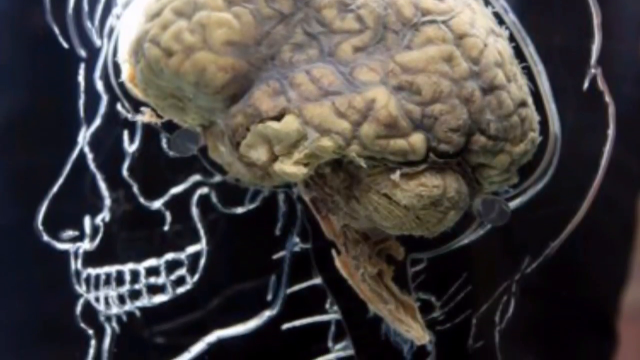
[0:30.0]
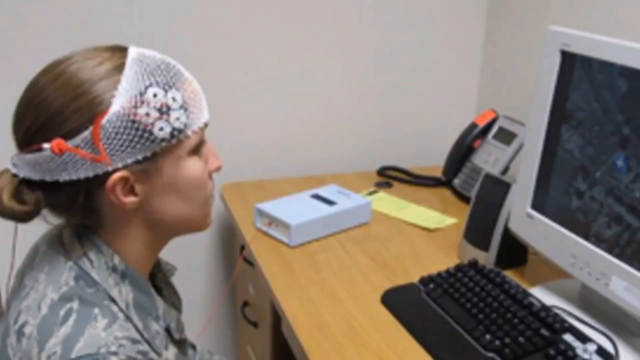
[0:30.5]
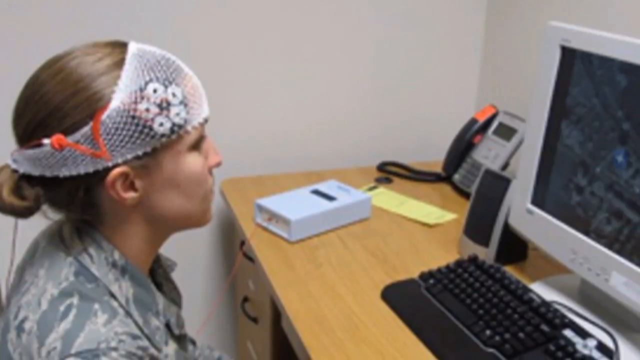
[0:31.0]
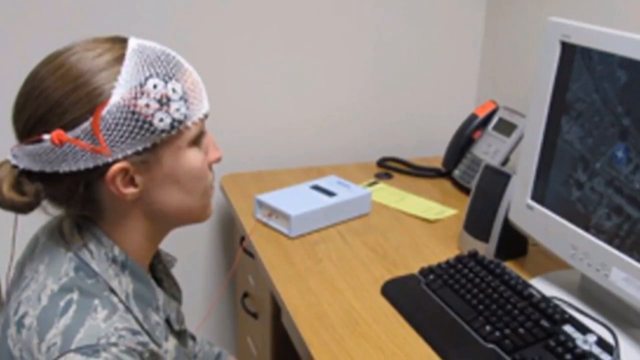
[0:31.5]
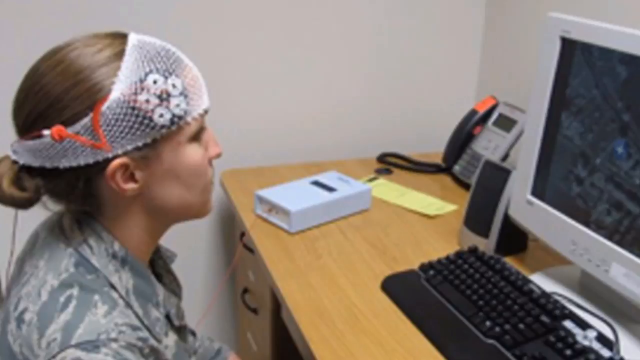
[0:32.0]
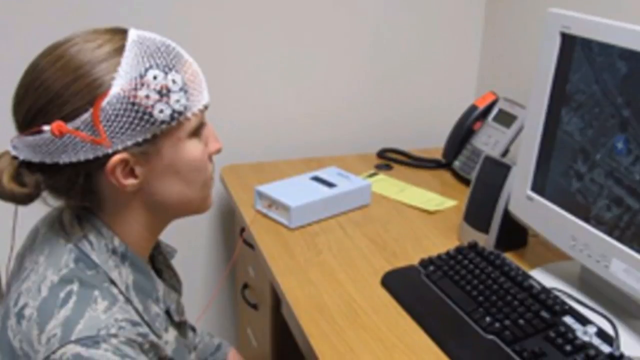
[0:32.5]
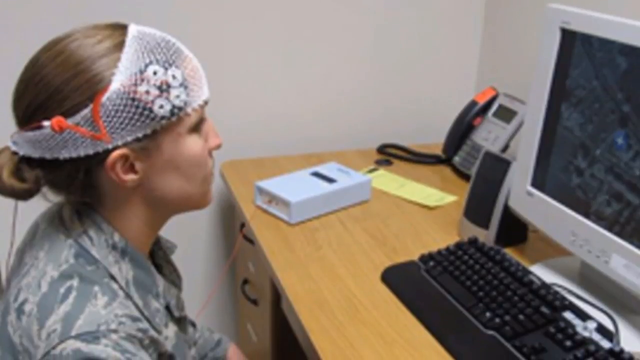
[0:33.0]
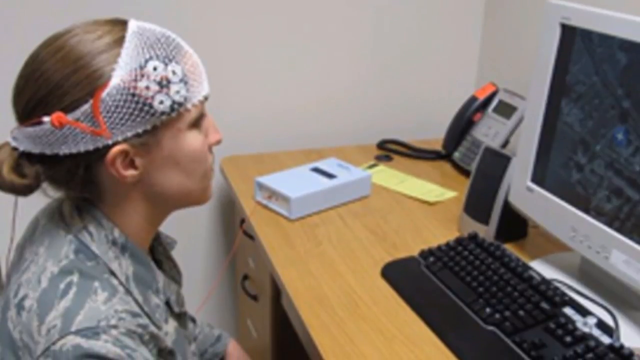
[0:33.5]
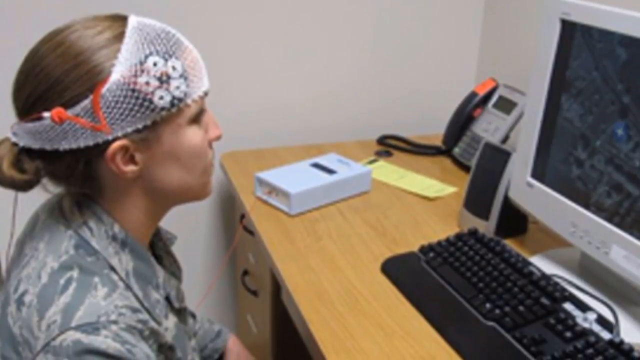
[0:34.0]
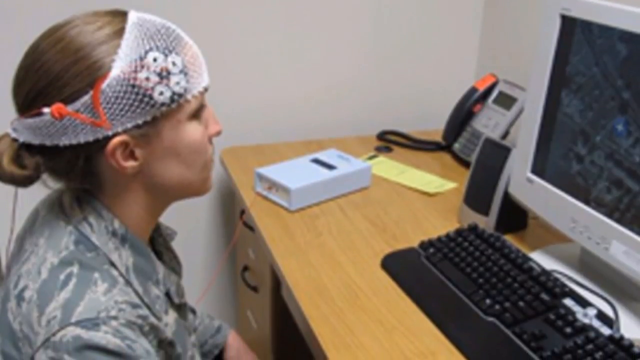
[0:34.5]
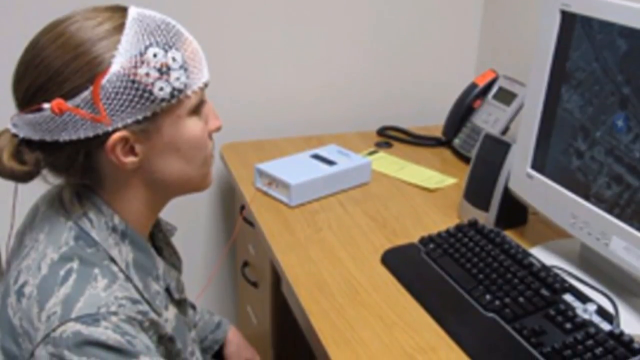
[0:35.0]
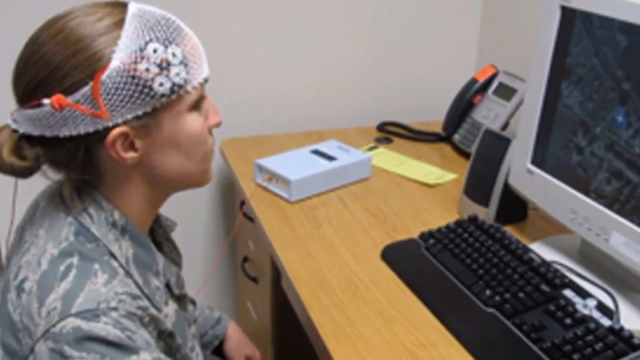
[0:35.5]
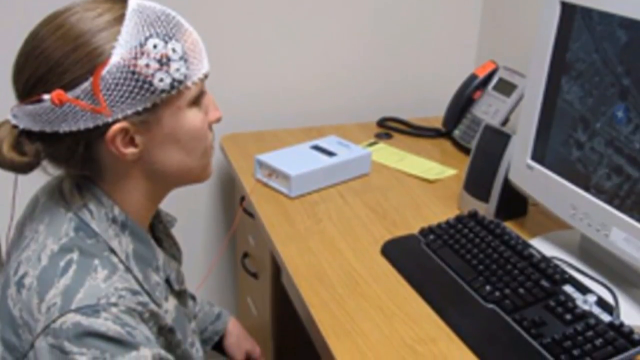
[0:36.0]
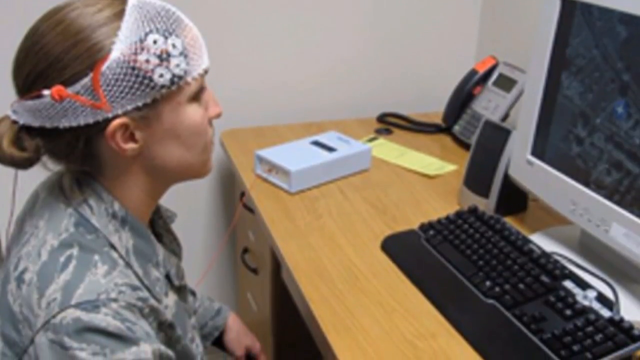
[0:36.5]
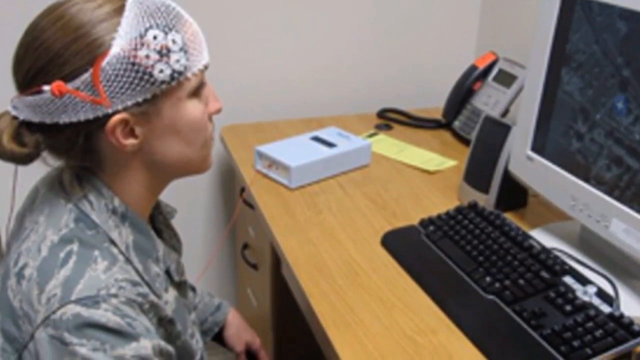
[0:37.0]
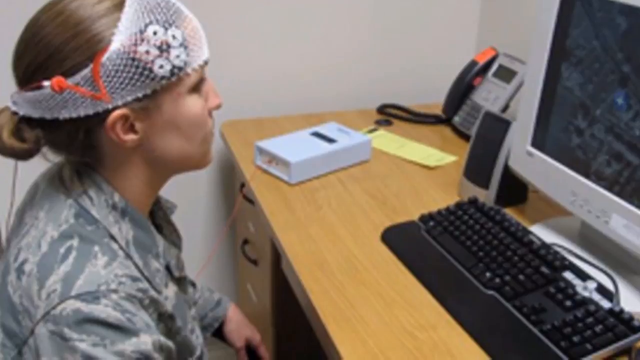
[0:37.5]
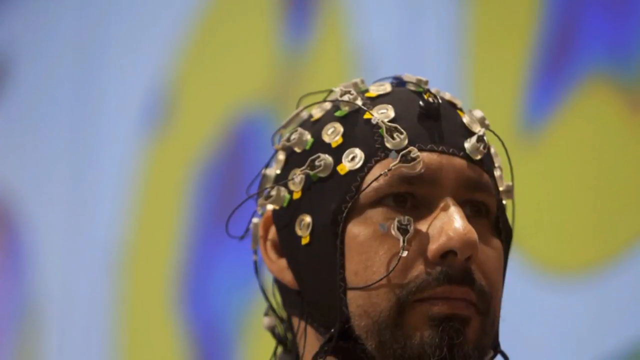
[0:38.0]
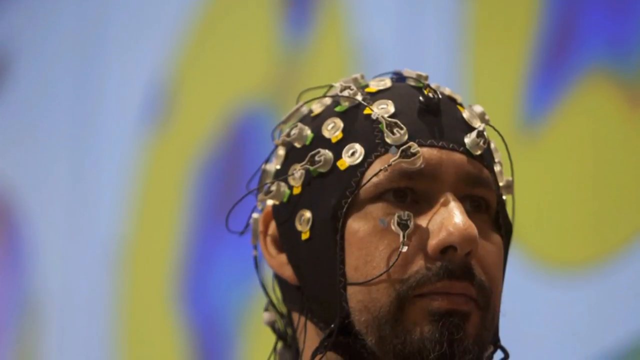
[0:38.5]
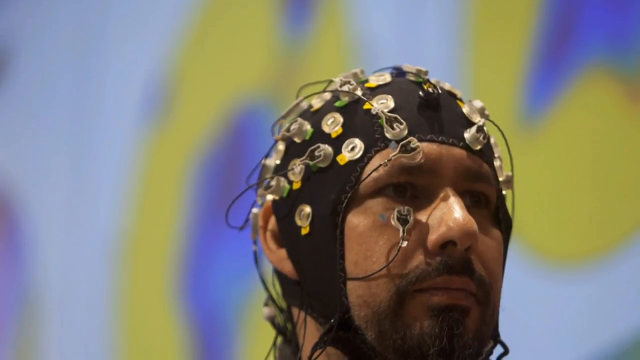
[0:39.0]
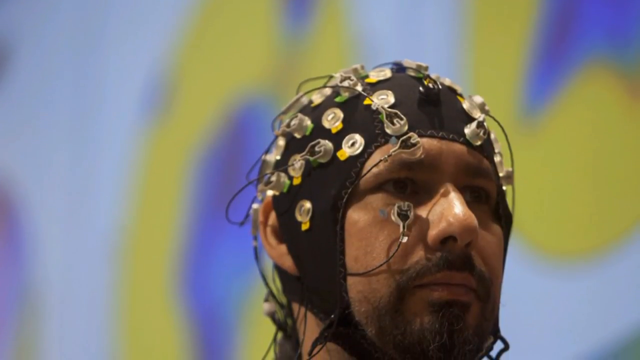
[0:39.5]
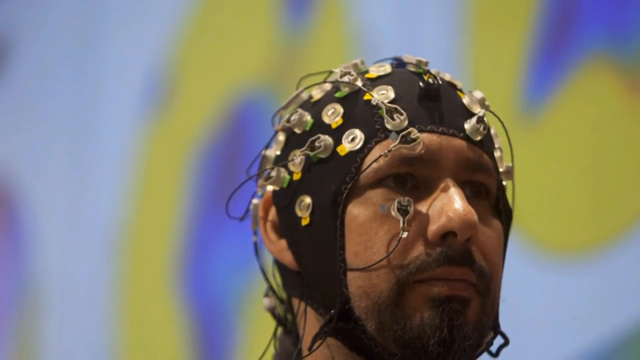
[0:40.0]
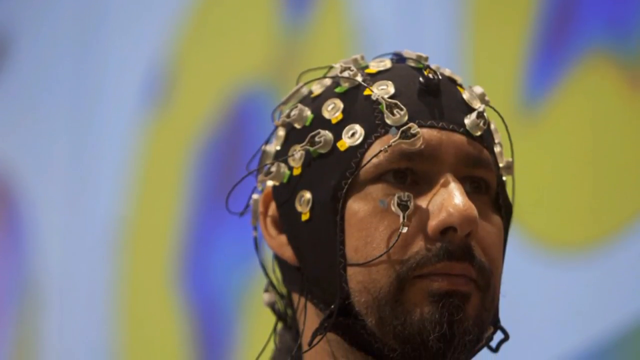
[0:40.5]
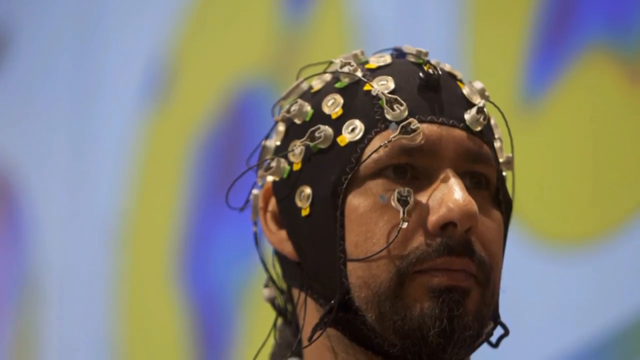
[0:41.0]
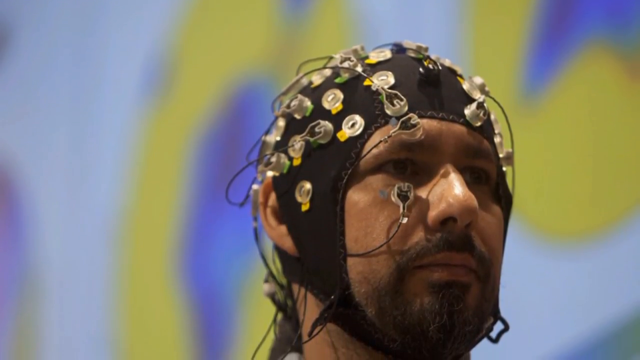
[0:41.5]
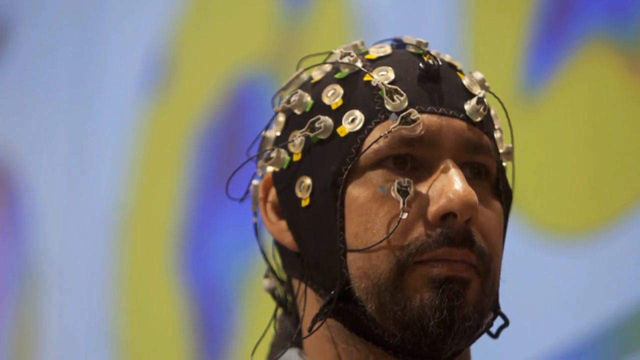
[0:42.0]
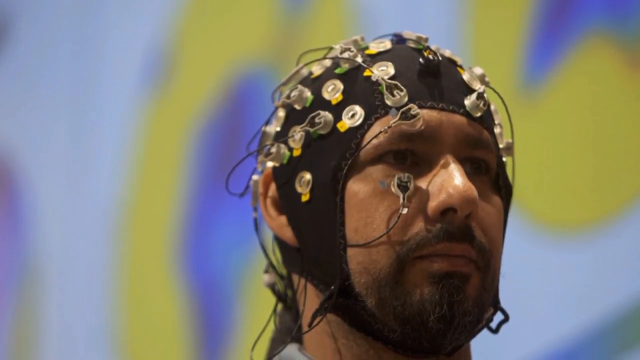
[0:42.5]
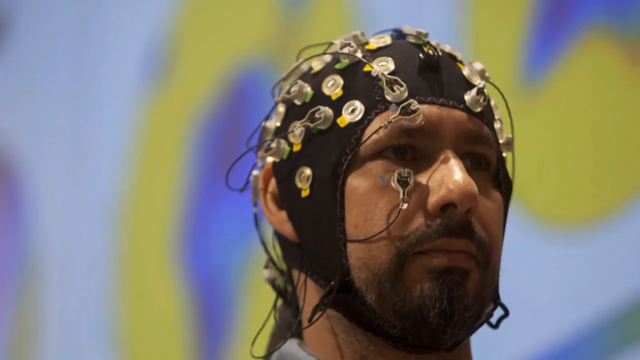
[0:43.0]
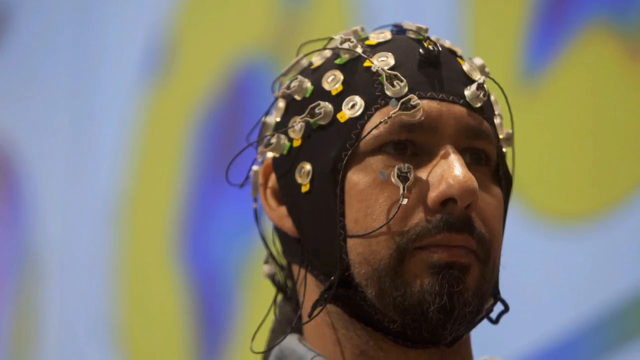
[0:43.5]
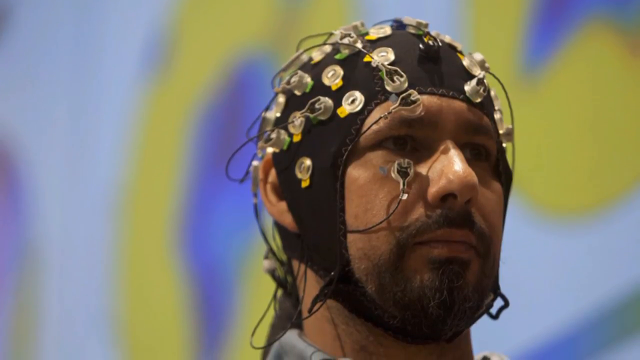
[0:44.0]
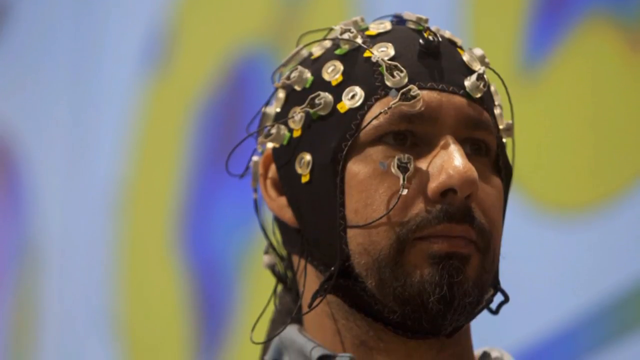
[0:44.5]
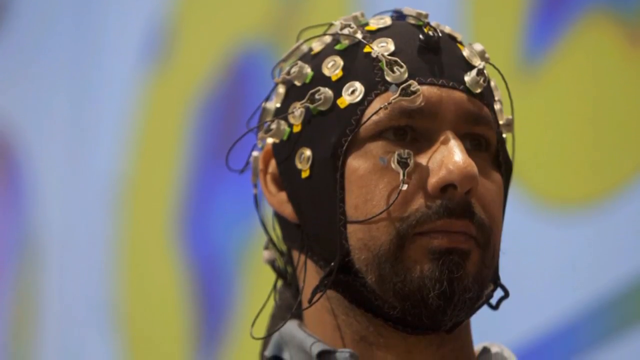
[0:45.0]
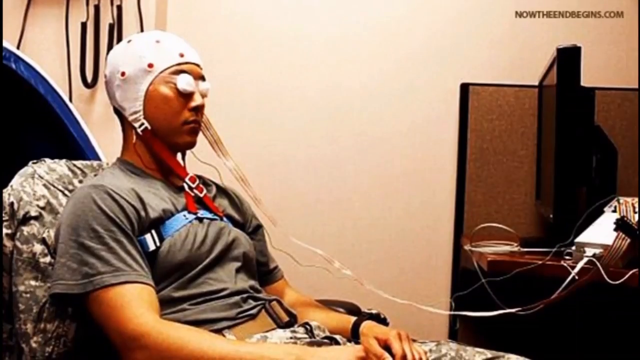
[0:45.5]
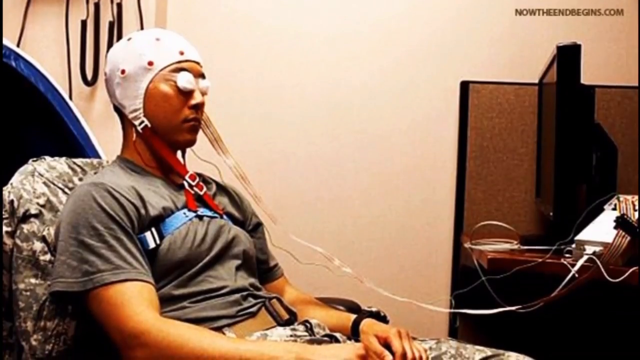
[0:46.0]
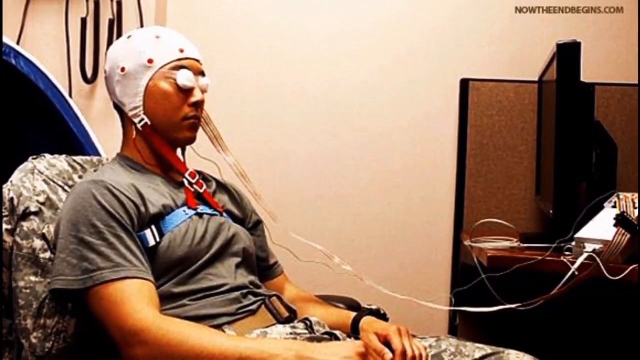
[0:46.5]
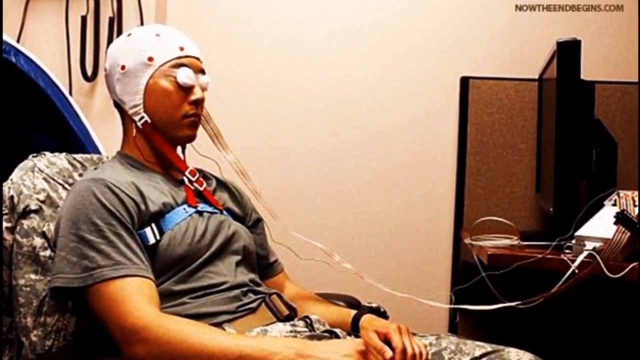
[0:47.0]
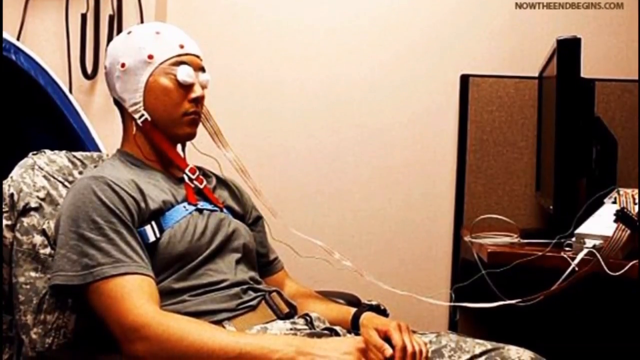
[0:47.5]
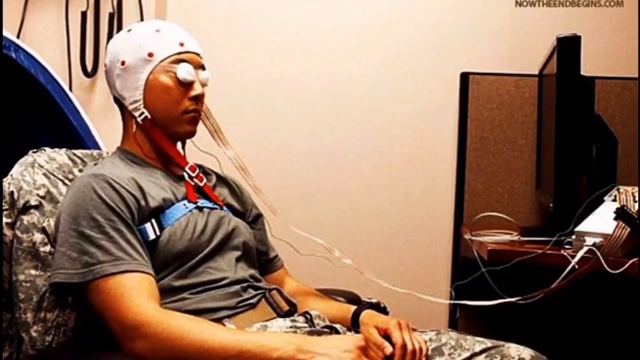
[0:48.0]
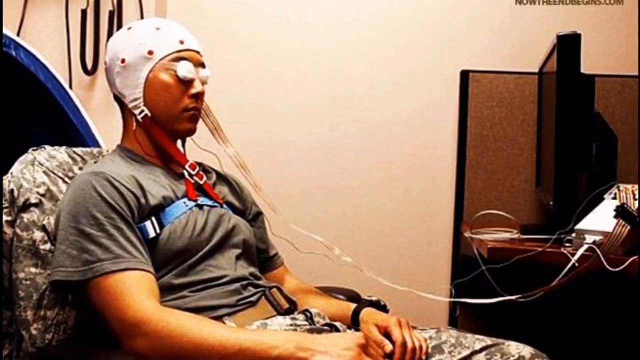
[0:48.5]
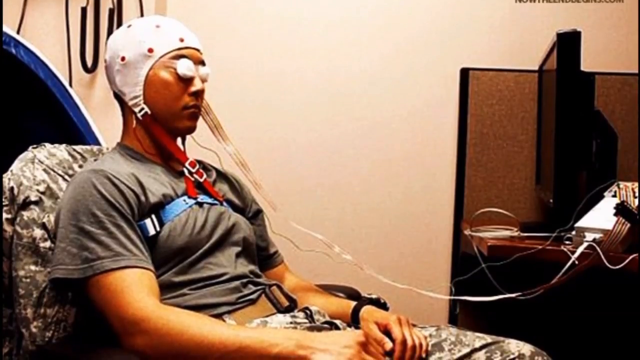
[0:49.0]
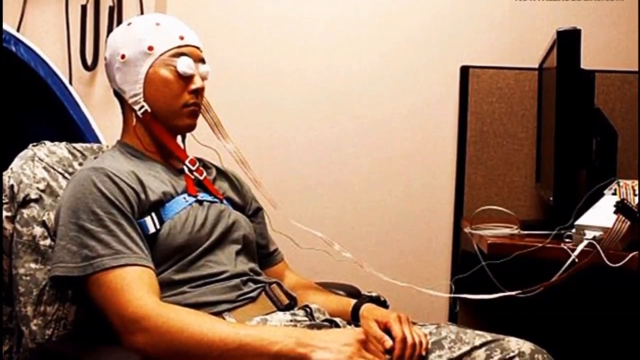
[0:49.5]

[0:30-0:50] A woman sits in front of a computer screen, wearing a netted white headband around her head with an orange piece attached above the ear. The camera zooms down. The next image shows a person with a black headband attached, along with lots of wires and circular outlets attached to it. The camera looks upward and shows only his head, with a very blurry blue and yellow background behind him. The camera moves slowly downward. Next, a person appears to be sitting in a bed with a cushion behind them. Their eyes are closed and seem to be covered with cotton balls. They wear a very thin white helmet with red buckles below the chin, and wires attached to the helmet connect to a machine and a monitor. The person is indoors, and there appears to be a beige wall behind them.